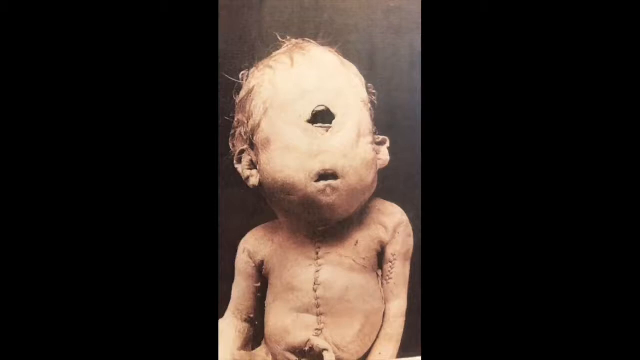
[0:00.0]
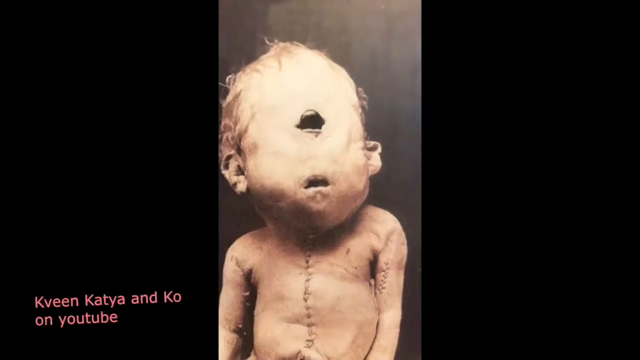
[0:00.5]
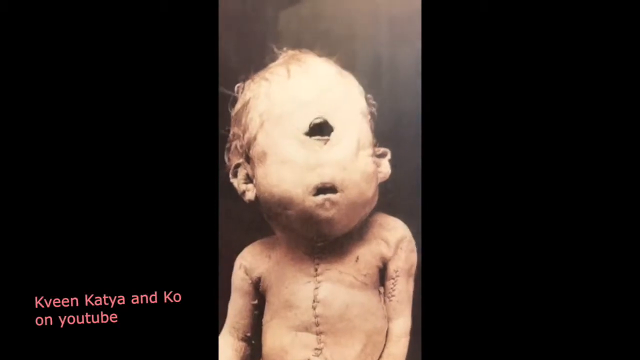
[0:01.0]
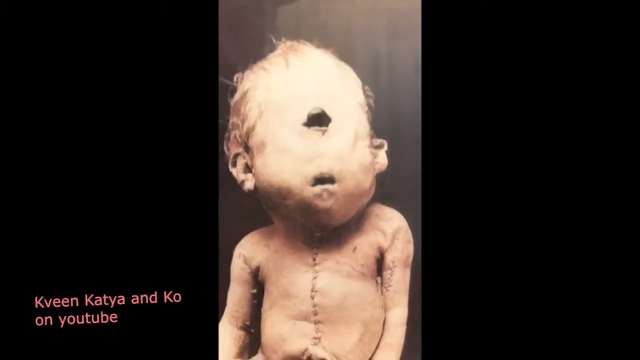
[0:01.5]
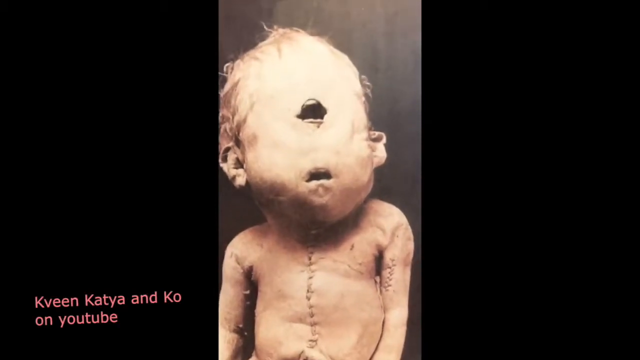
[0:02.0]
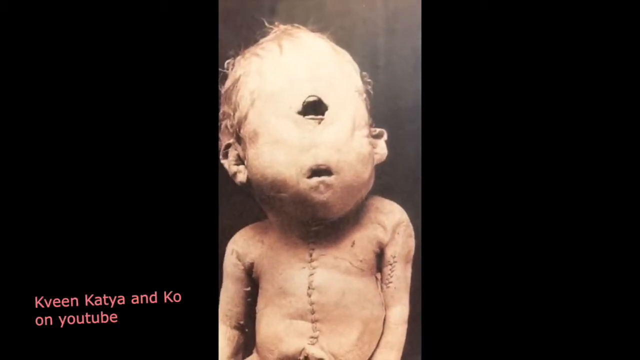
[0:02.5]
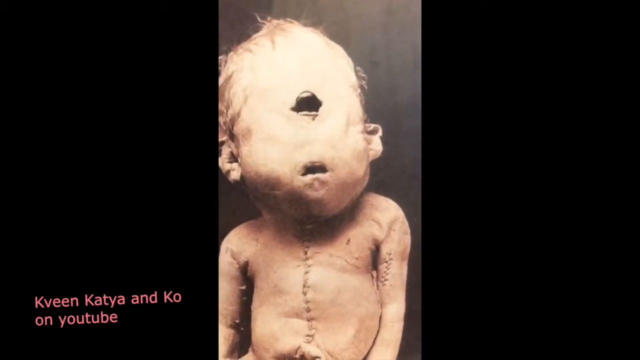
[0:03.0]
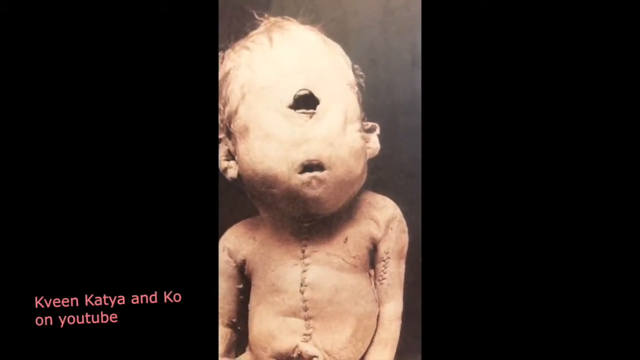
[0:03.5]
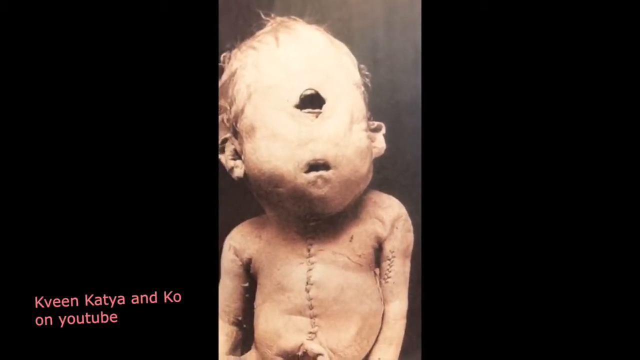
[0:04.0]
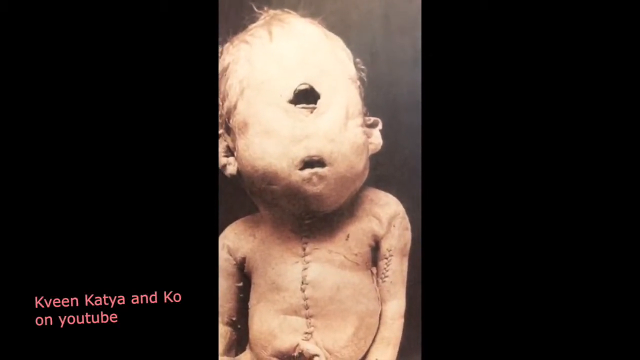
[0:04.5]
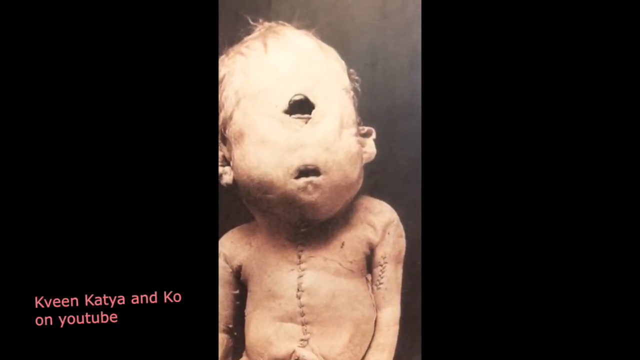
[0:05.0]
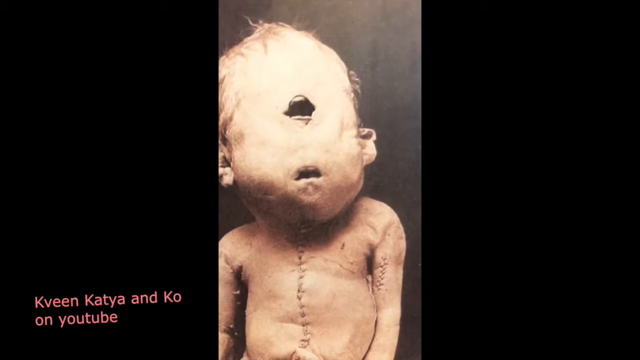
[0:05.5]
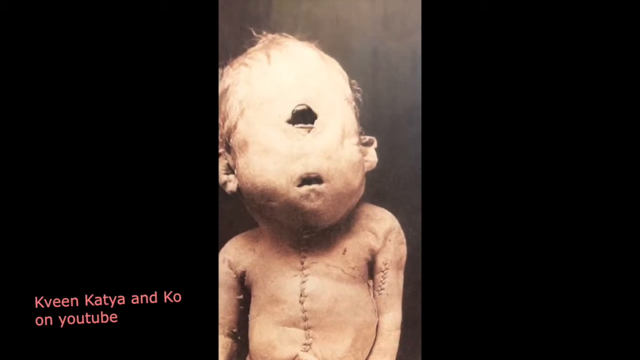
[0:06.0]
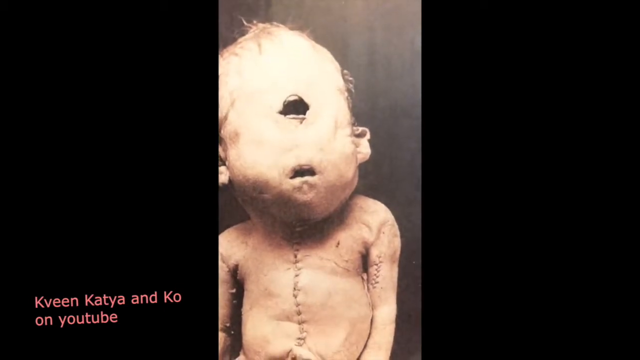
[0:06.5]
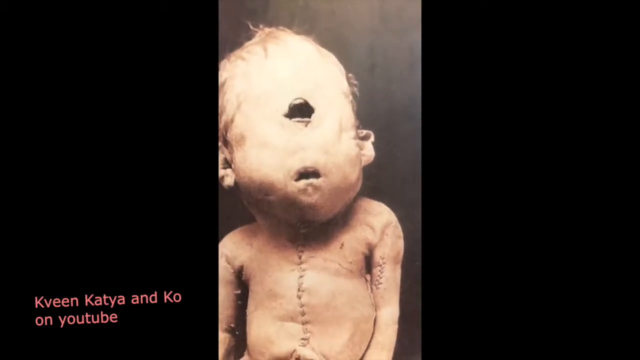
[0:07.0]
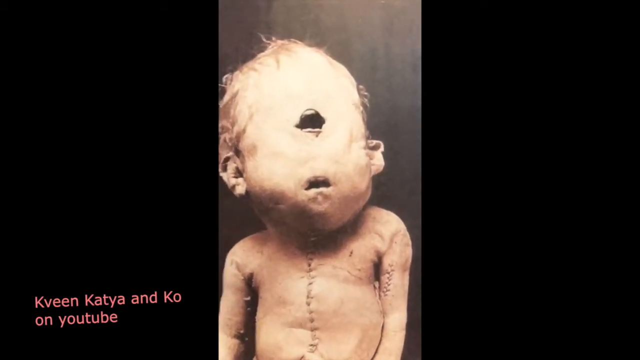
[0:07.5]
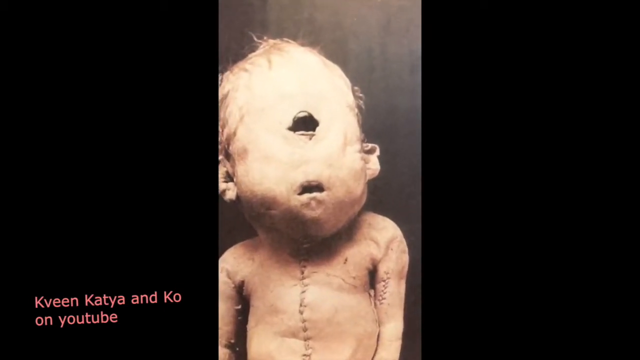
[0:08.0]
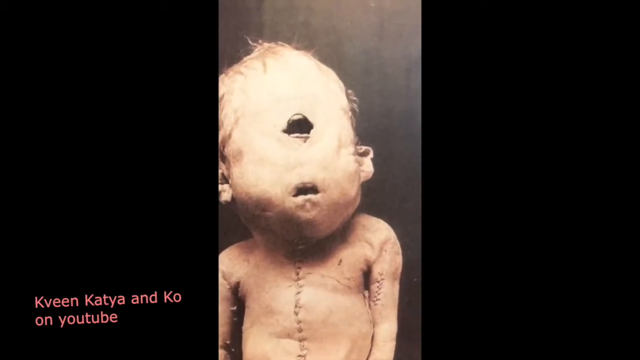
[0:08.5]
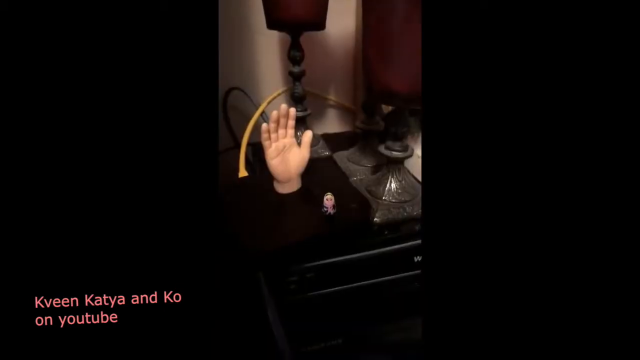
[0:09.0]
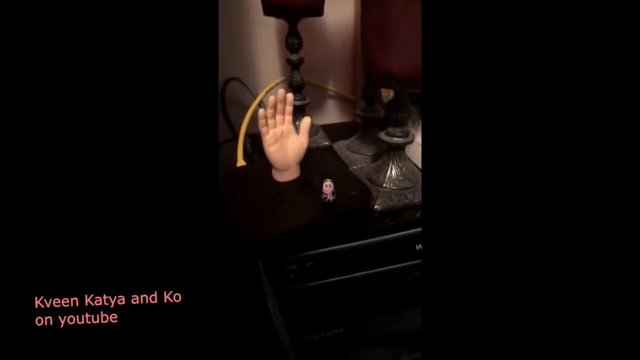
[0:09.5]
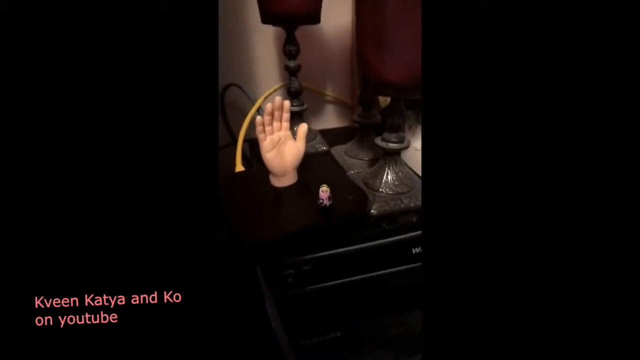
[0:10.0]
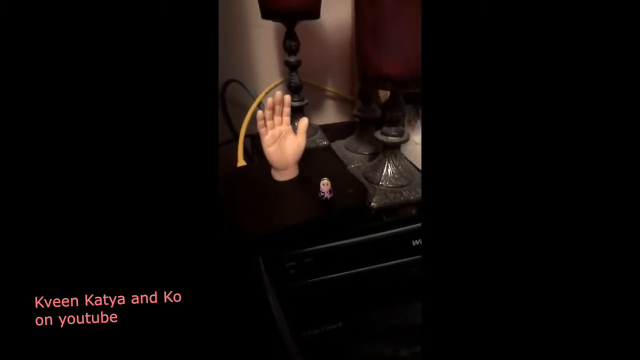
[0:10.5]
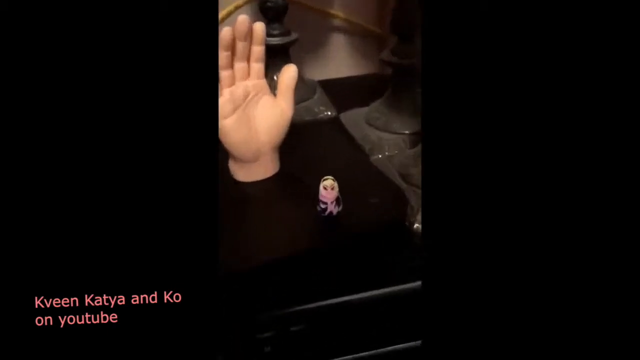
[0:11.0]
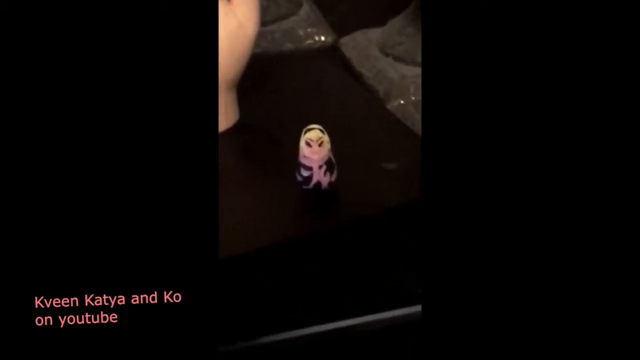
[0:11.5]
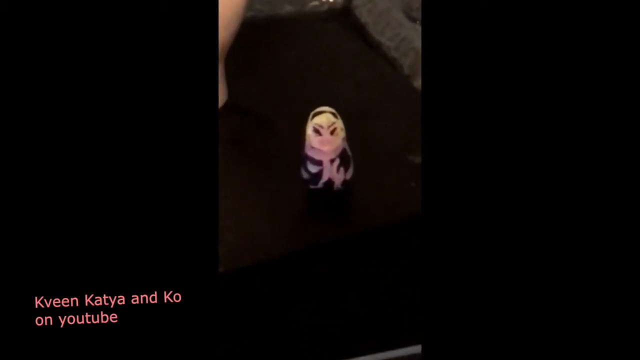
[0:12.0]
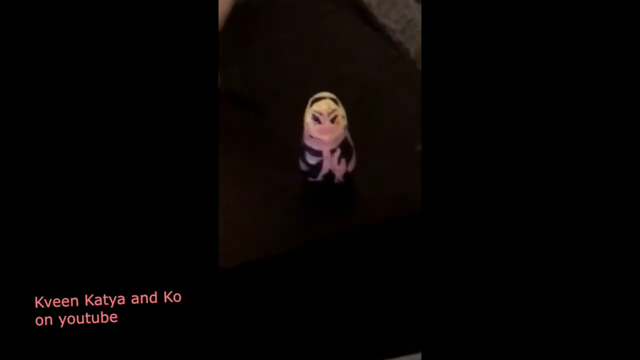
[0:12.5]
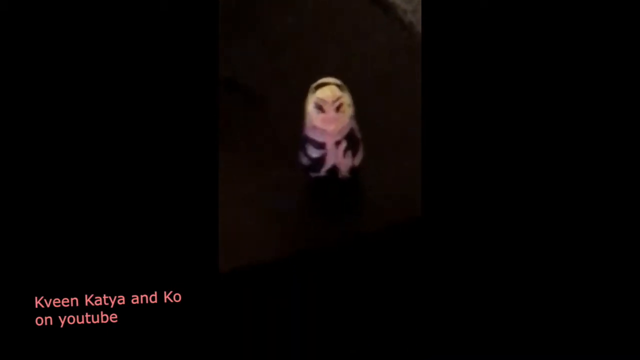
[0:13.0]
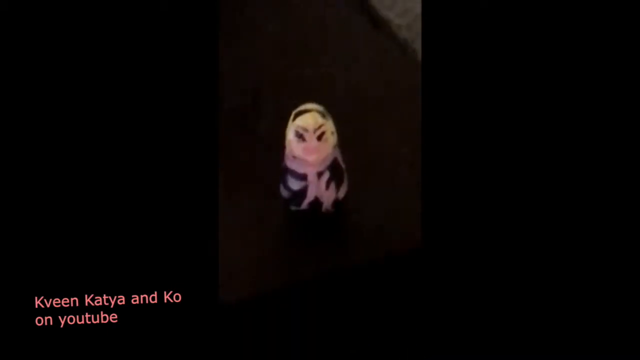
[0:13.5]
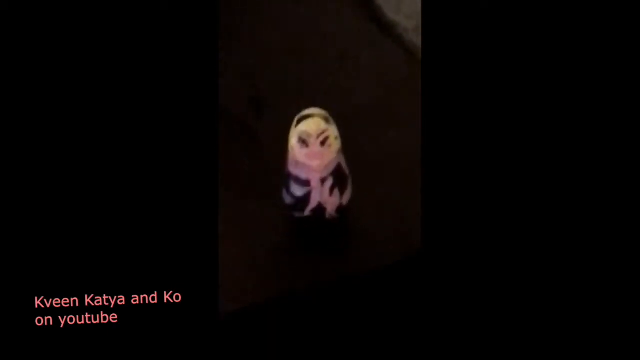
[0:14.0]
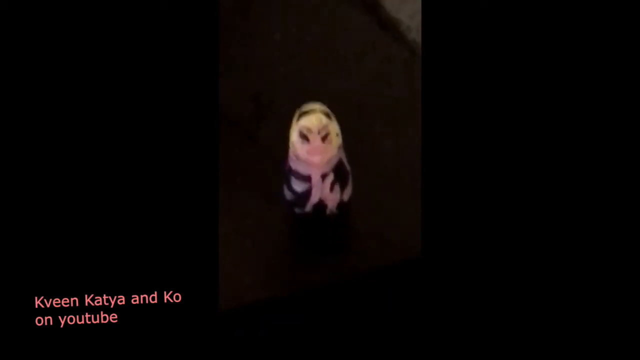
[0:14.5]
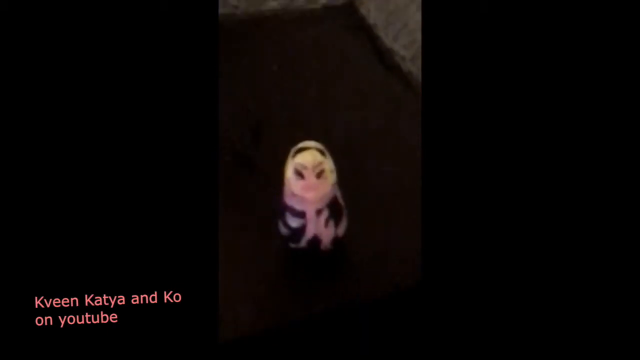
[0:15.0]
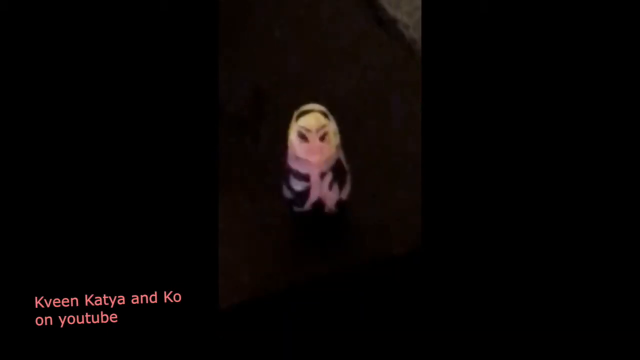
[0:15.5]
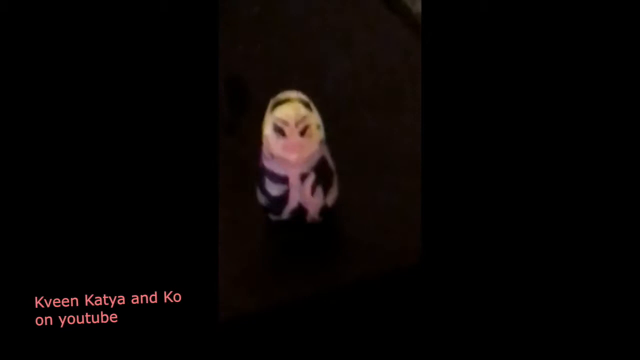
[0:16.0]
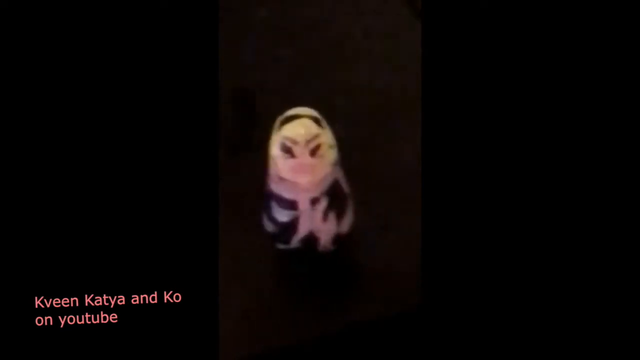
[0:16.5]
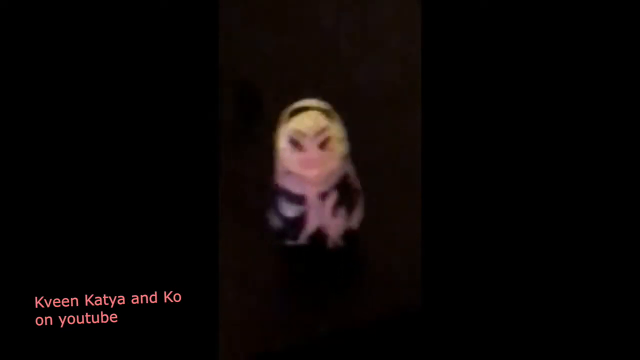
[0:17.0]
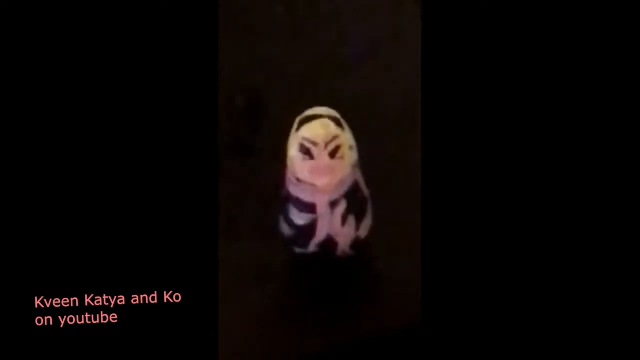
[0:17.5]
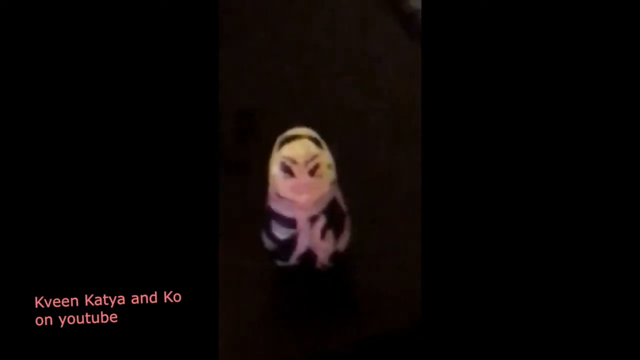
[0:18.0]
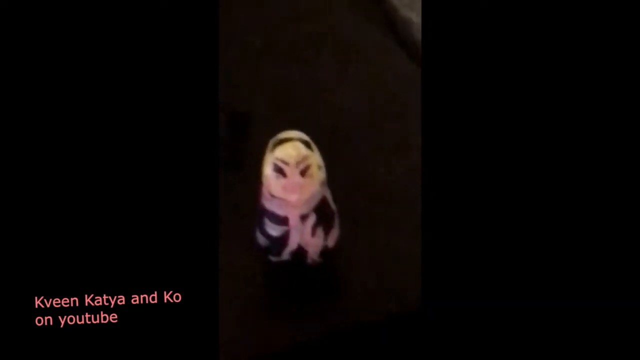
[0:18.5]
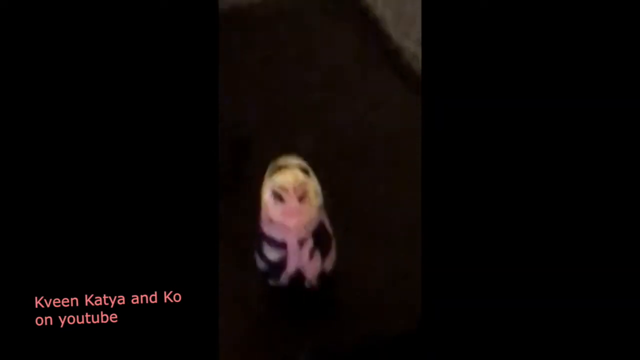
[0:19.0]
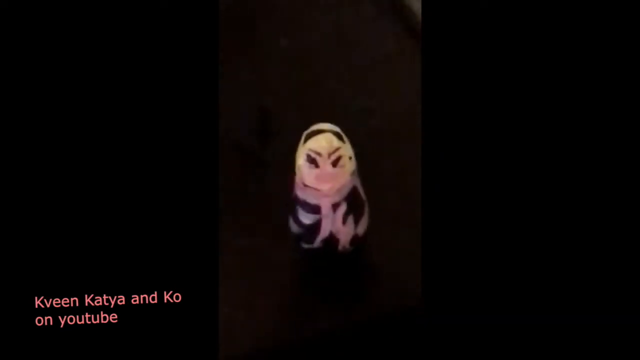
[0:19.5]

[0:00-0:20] In the middle of the video is what looks almost like a little baby, apparently a stuffed doll that has been stitched, and it is unclear whether it has been photoshopped. It does look like it has a mouth on its head. There is a hand kind of standing up on its own. There is also a little, tiny doll that looks like it has been carved out of wood. In the bottom left corner, text reads "Kayin Kataya & Co. on YouTube". The doll looks very realistic and has a regular mouth down near the chin area, and it is as though someone photoshopped or put a mouth up high where the eyes would be.